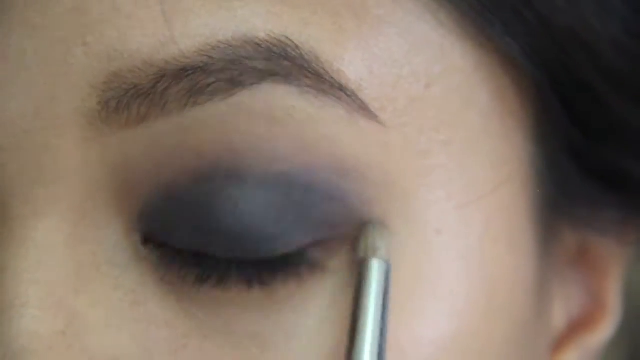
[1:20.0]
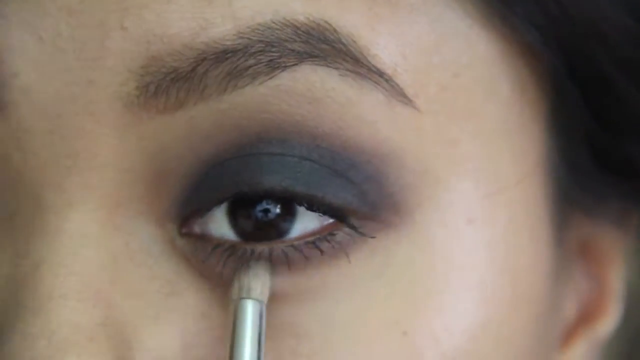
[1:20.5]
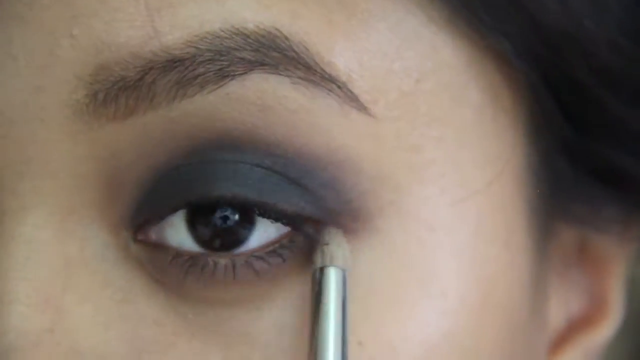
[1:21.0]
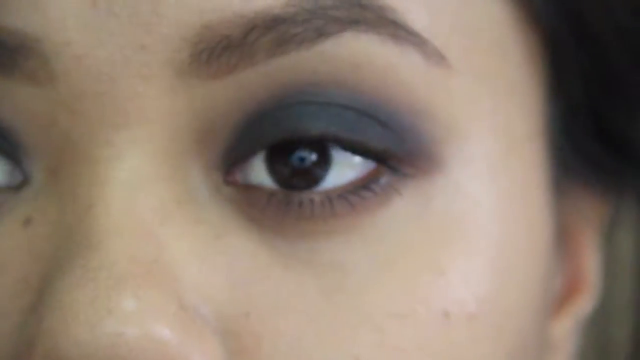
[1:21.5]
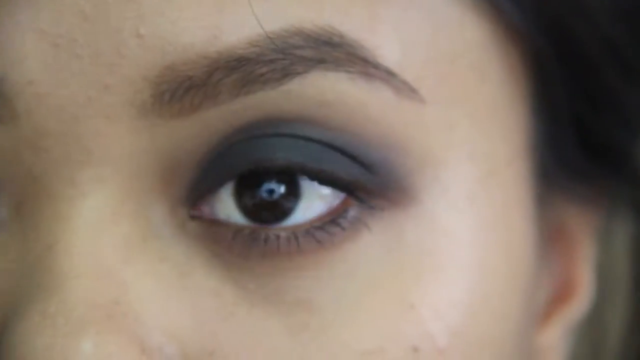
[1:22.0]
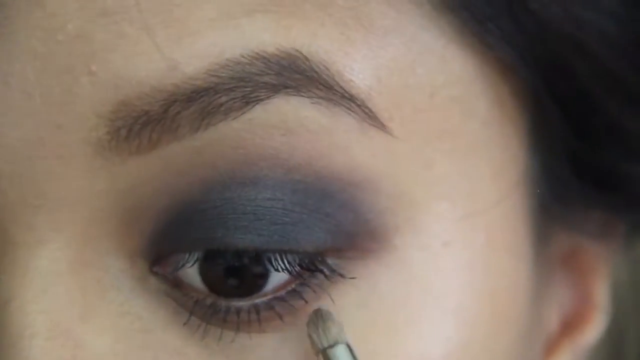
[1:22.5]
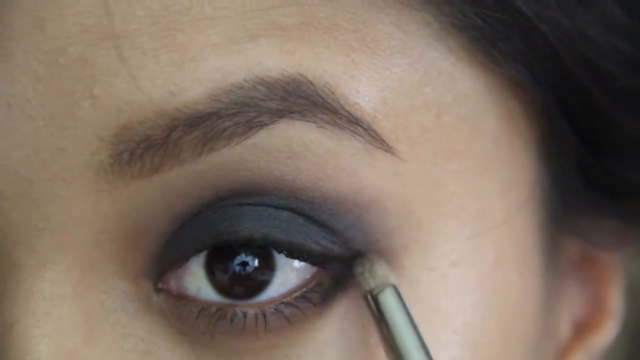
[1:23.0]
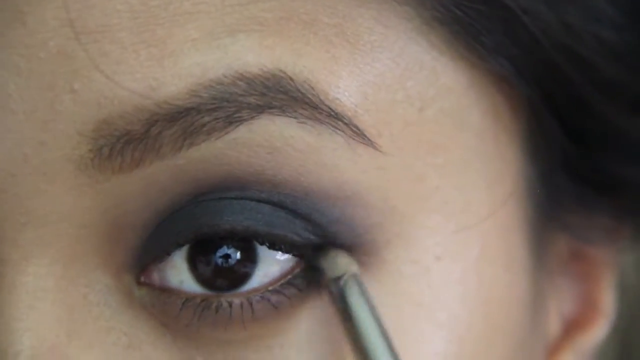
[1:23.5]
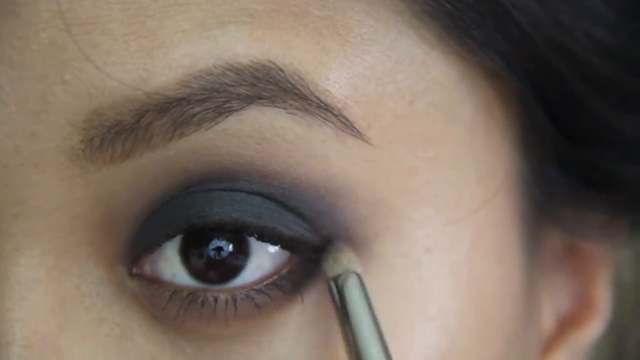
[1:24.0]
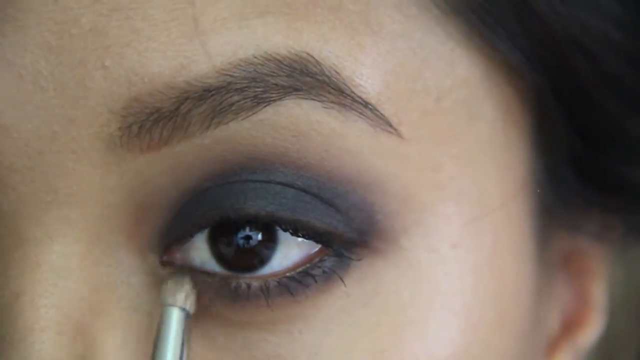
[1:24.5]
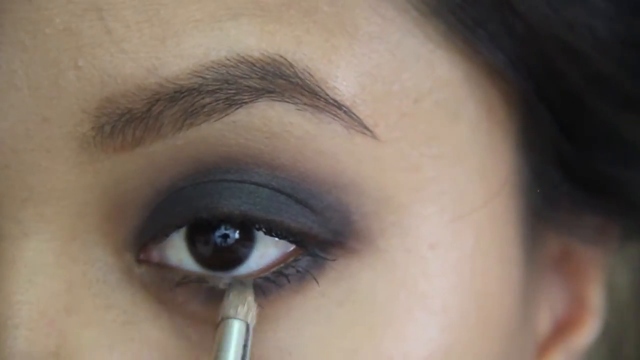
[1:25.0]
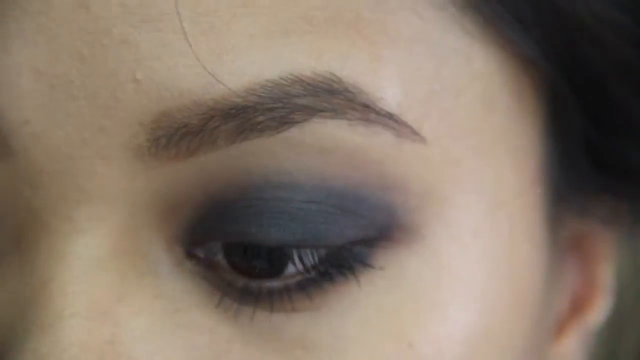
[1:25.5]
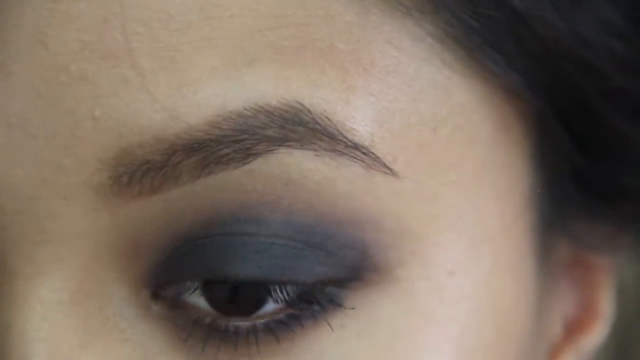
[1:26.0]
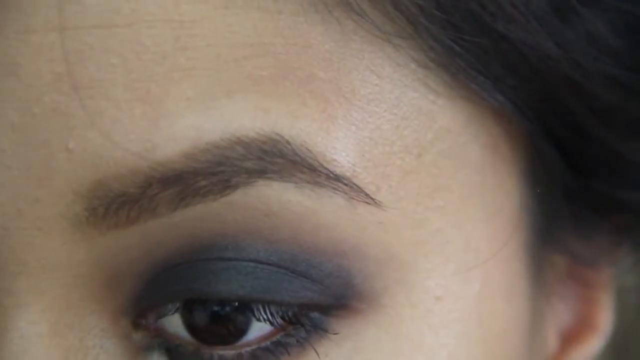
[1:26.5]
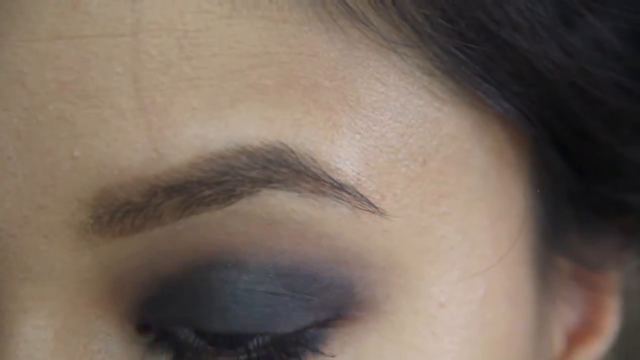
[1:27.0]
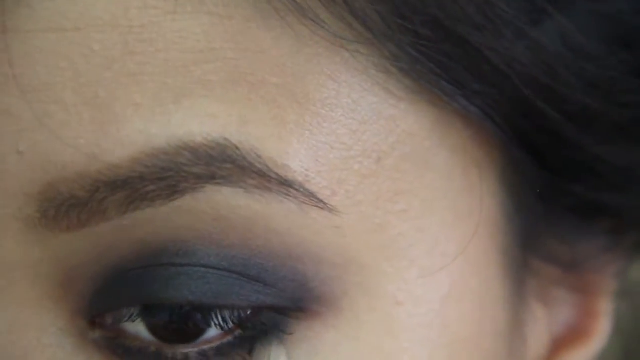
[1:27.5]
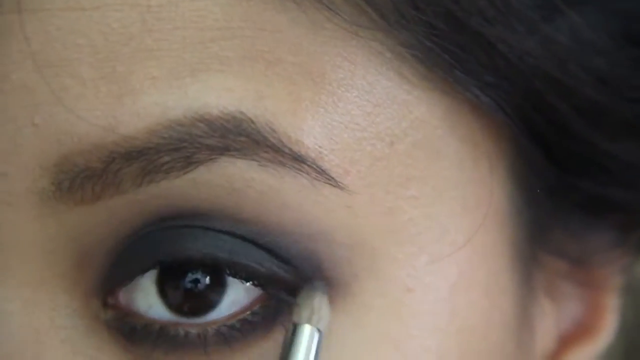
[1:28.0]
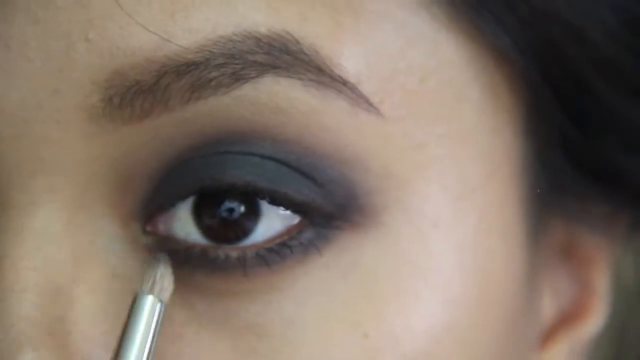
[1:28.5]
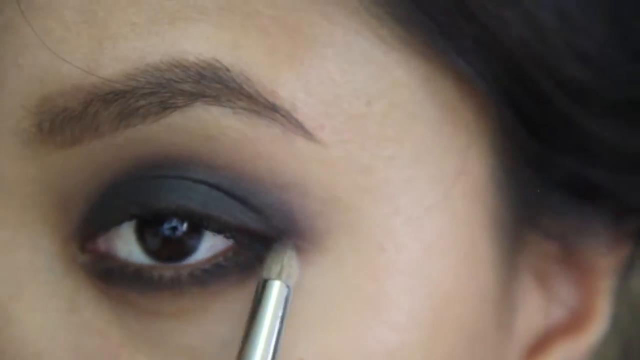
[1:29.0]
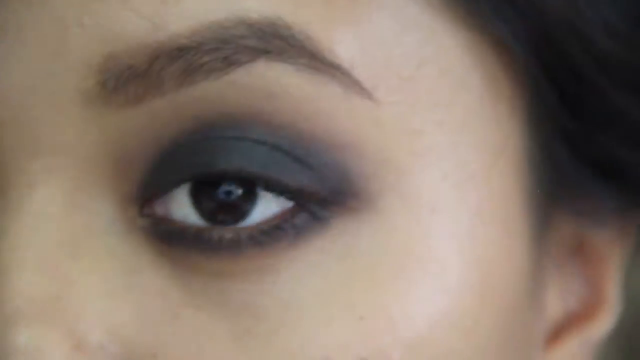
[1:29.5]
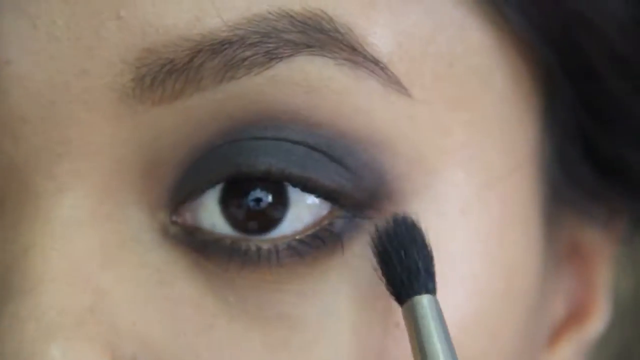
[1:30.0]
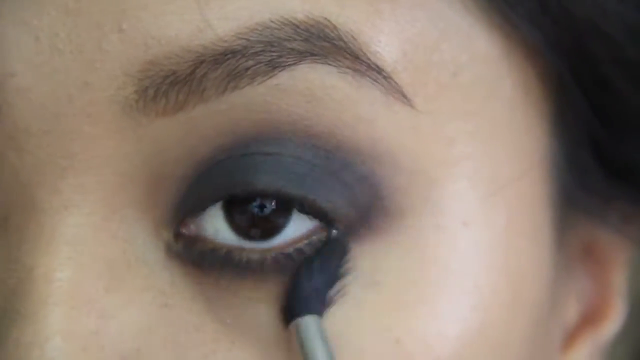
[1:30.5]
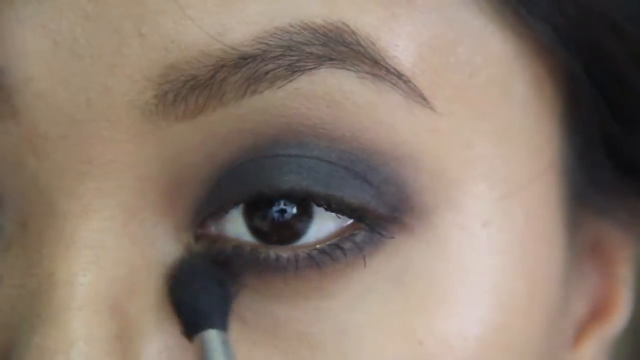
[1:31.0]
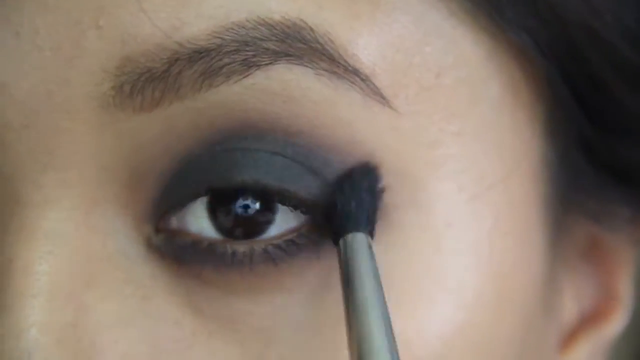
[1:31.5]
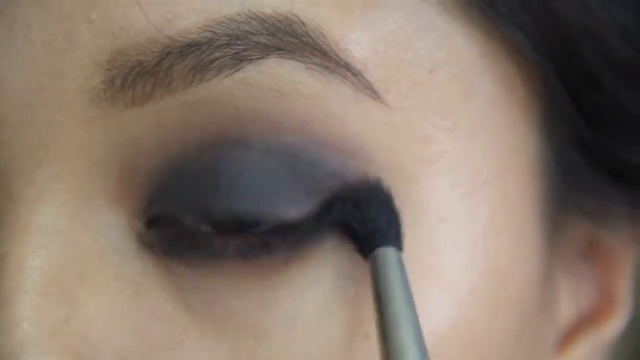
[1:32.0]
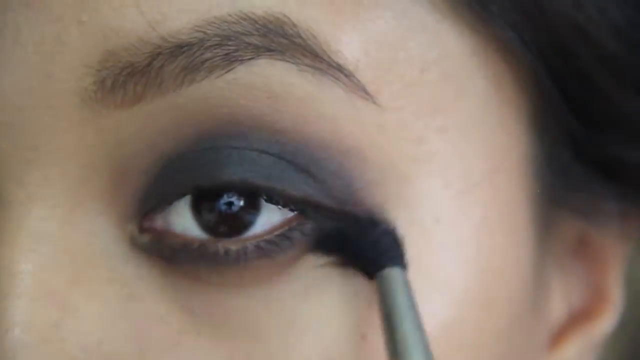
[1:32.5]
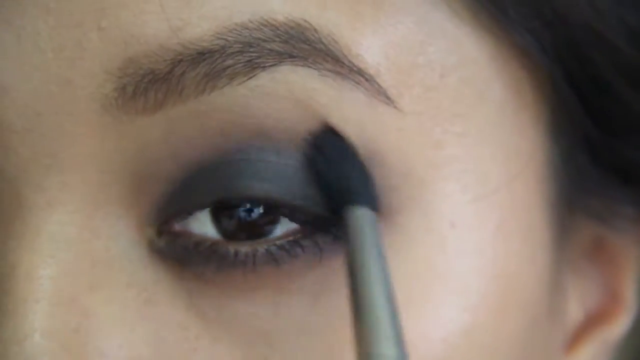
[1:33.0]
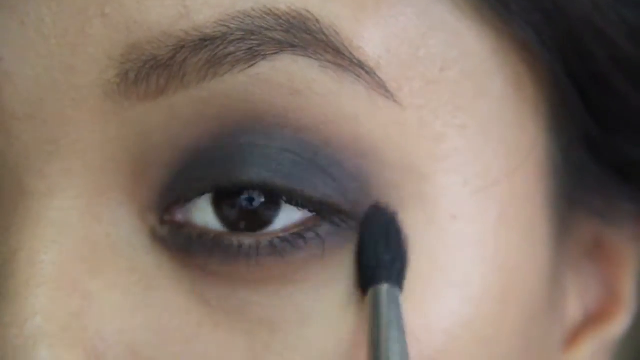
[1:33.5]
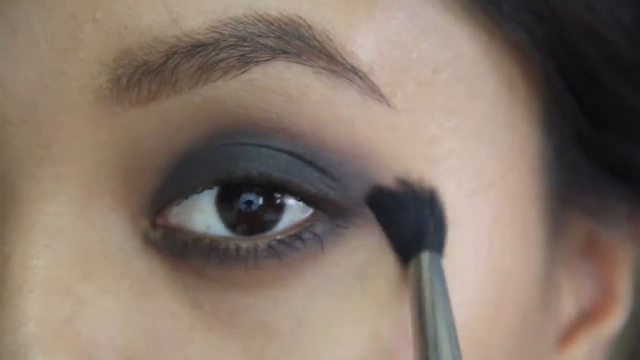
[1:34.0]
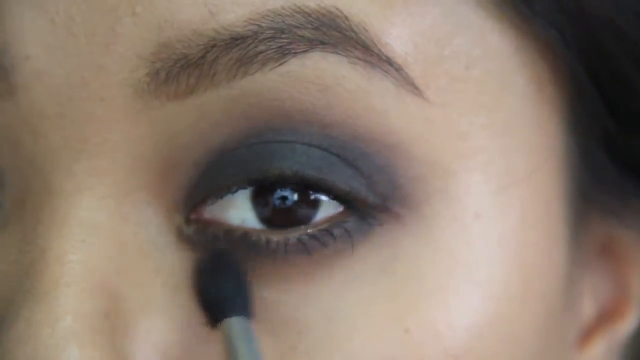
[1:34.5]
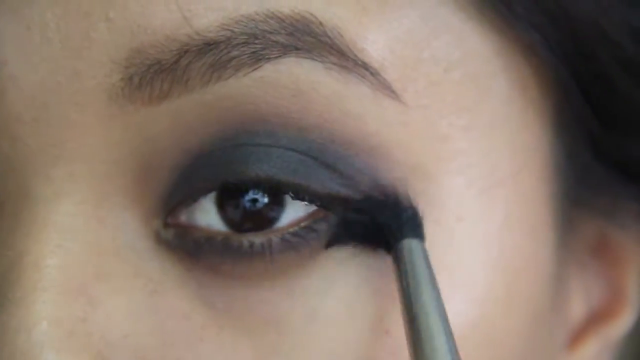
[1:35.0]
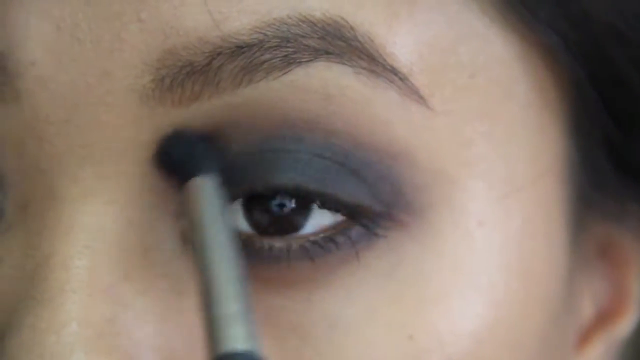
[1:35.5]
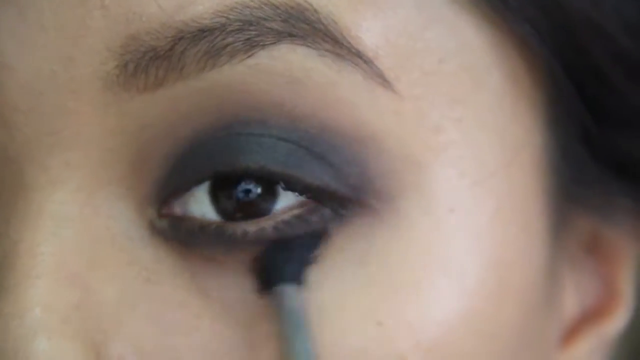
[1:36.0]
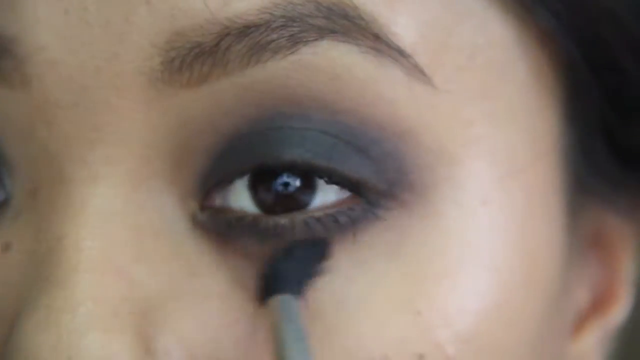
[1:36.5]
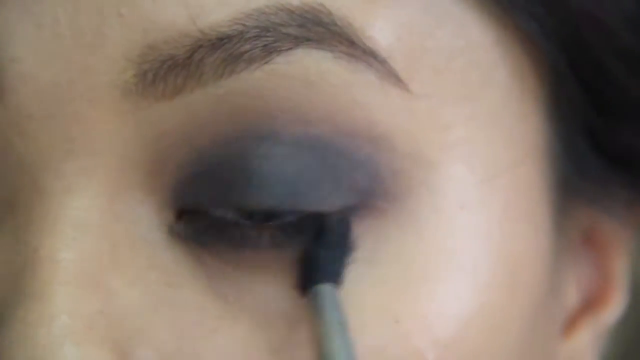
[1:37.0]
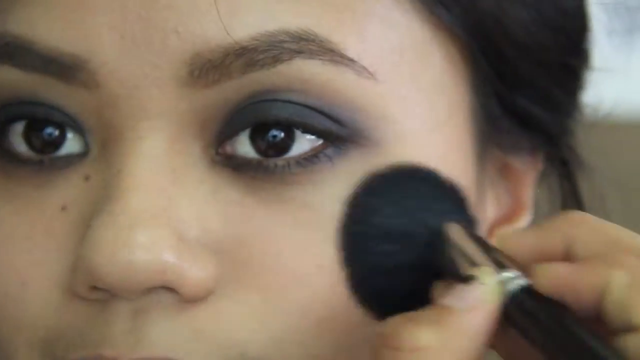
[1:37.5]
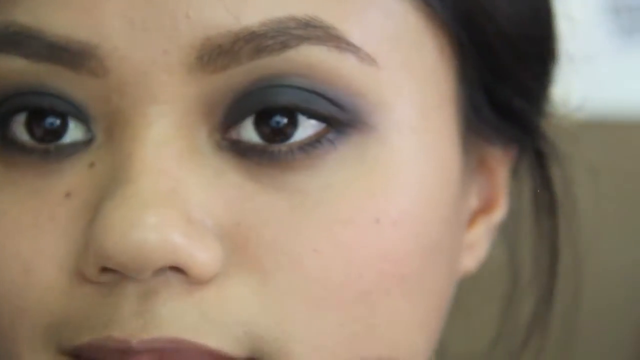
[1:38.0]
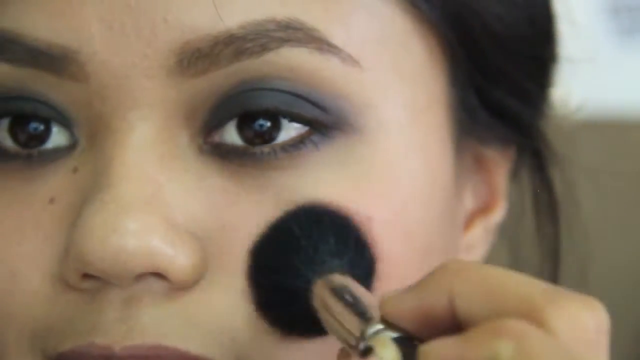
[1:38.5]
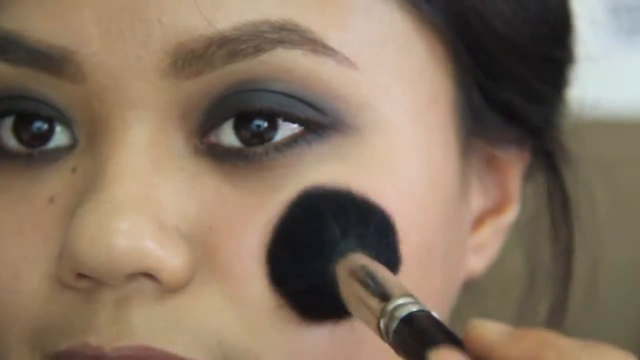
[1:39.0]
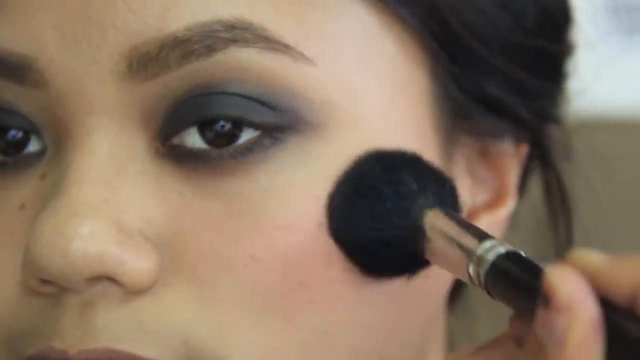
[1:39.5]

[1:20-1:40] She works on the other eye, including the underneath side of the eye, showing each step in detail. The eye makeup makes her eyes pop.